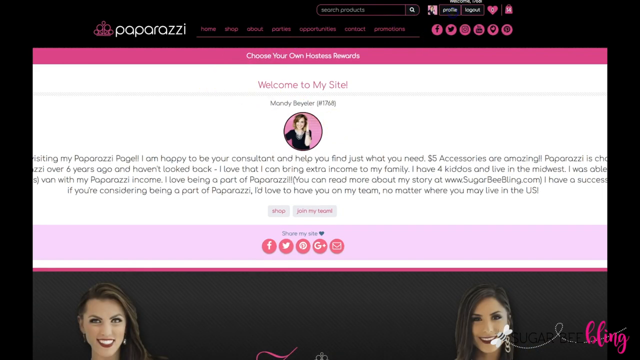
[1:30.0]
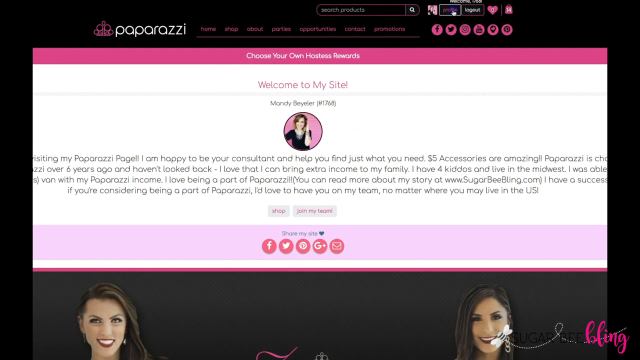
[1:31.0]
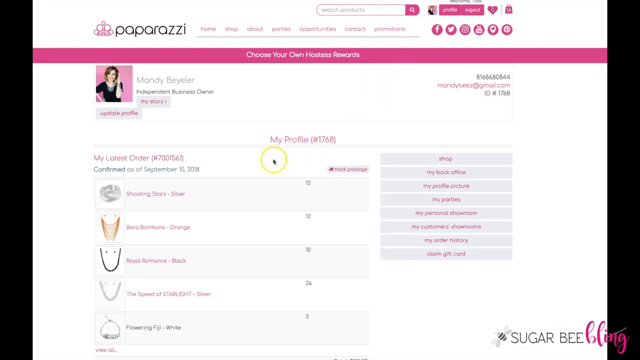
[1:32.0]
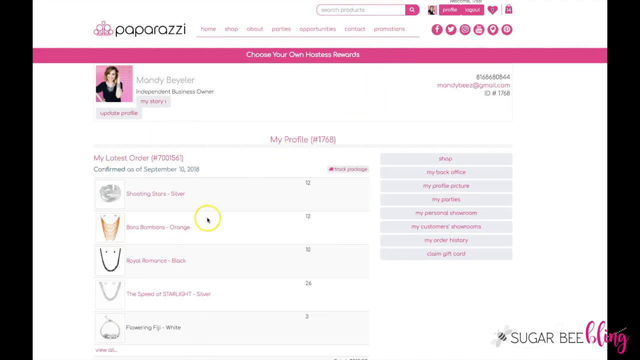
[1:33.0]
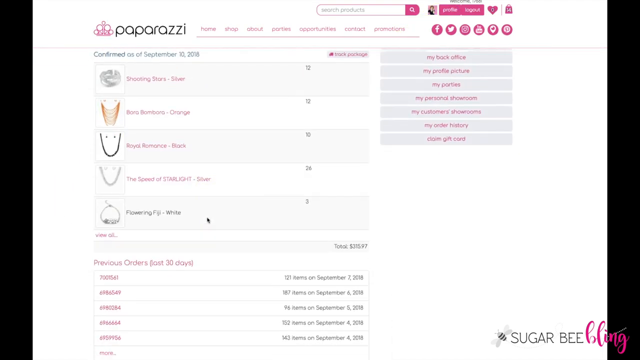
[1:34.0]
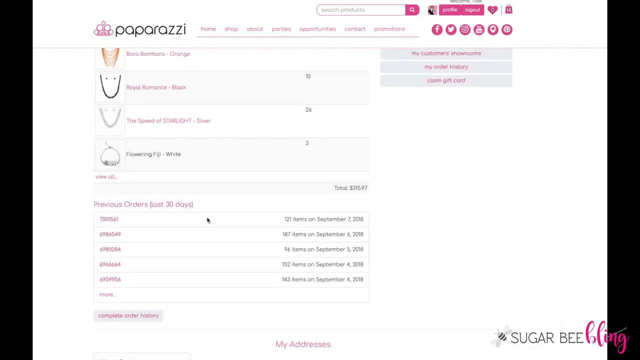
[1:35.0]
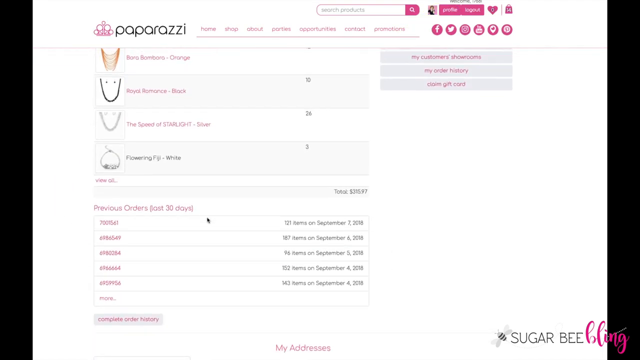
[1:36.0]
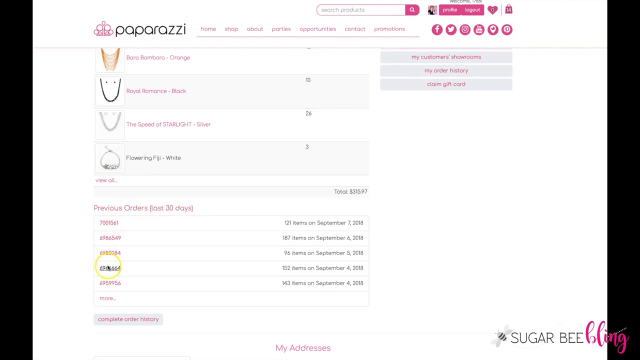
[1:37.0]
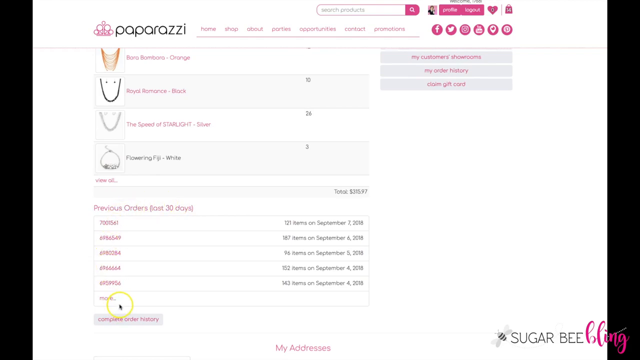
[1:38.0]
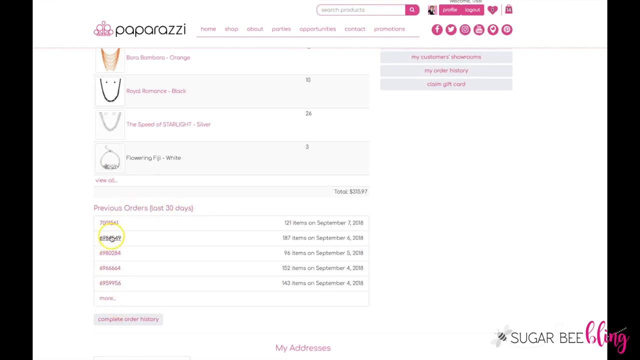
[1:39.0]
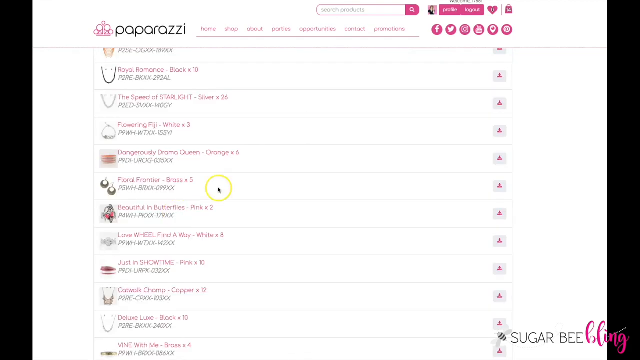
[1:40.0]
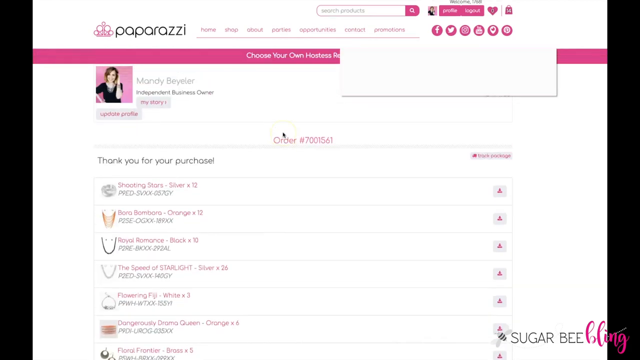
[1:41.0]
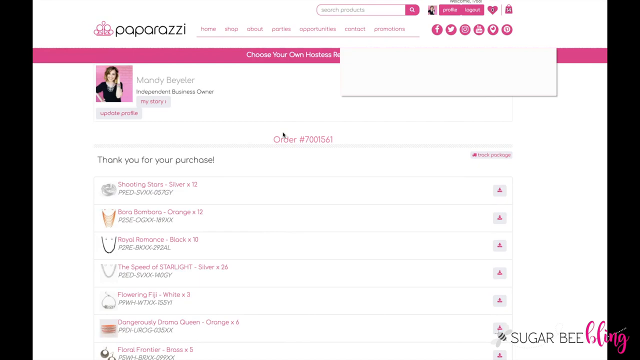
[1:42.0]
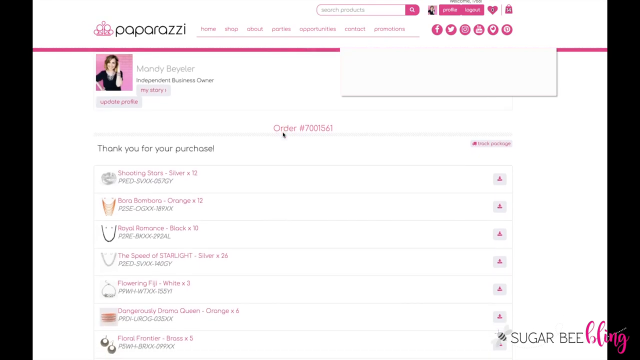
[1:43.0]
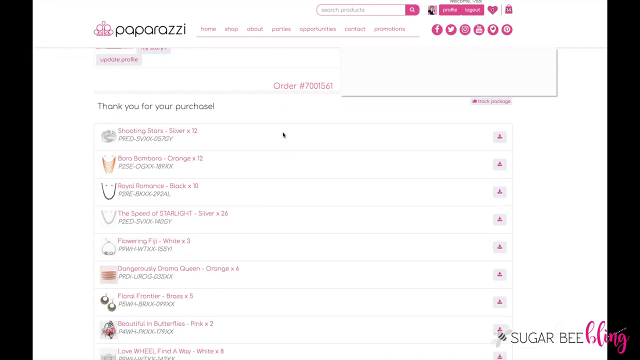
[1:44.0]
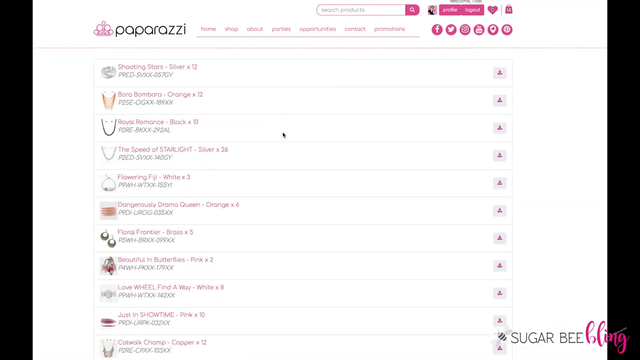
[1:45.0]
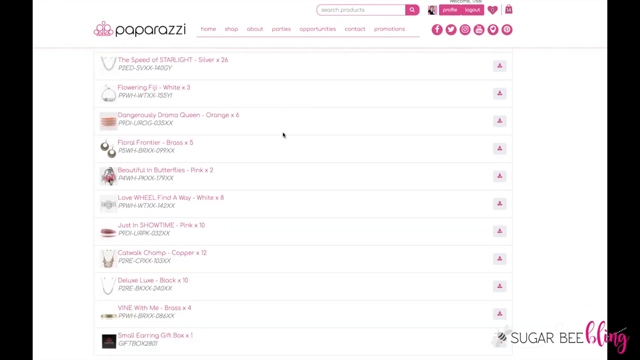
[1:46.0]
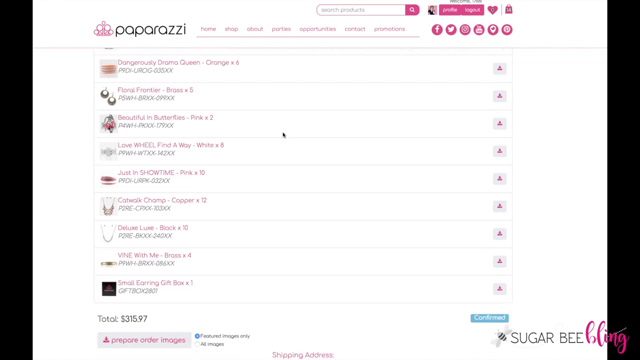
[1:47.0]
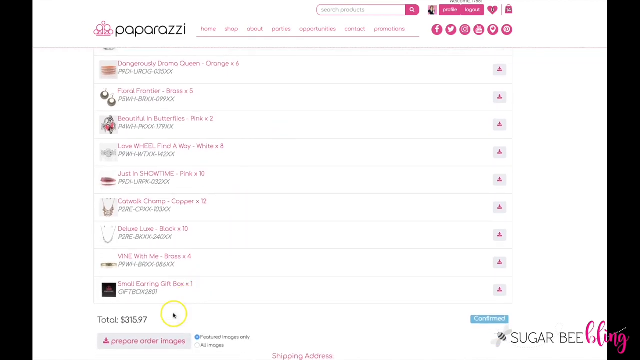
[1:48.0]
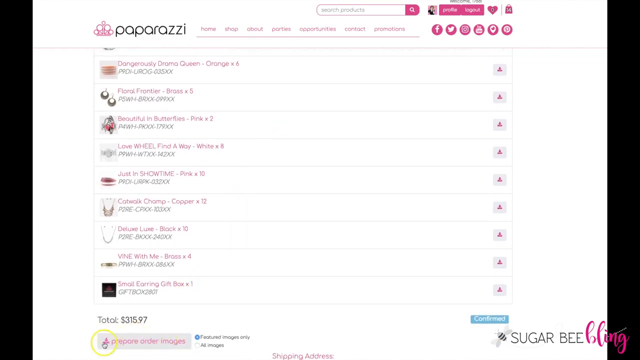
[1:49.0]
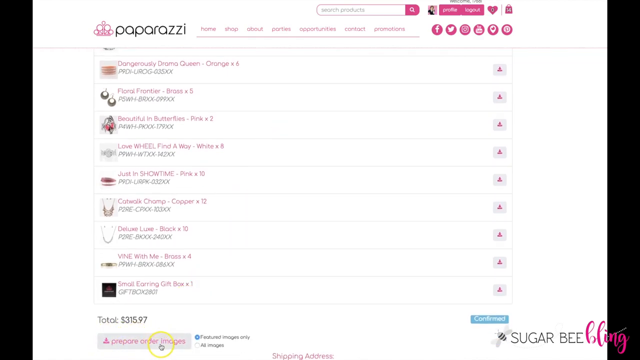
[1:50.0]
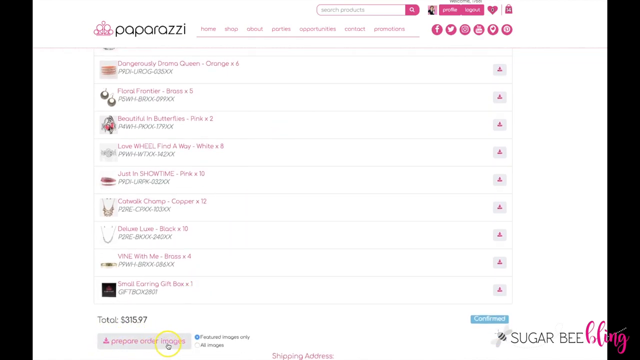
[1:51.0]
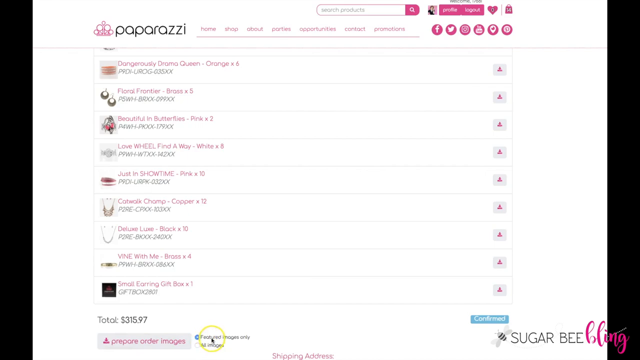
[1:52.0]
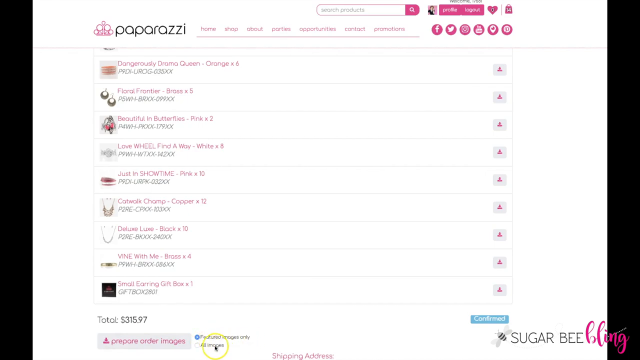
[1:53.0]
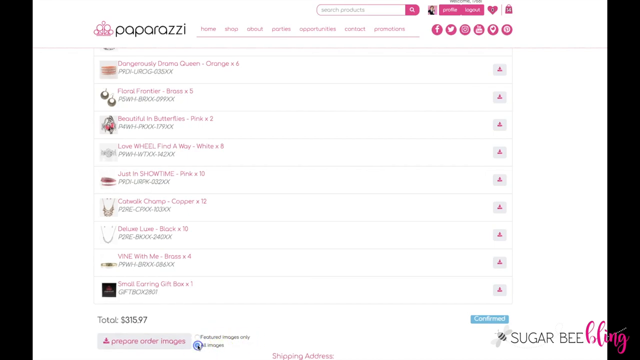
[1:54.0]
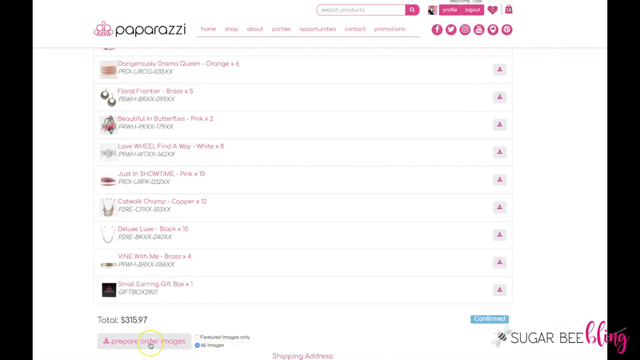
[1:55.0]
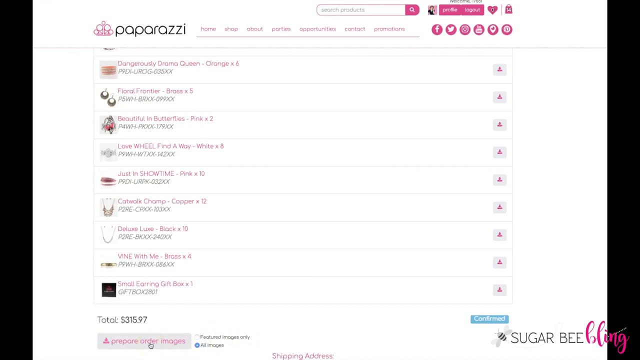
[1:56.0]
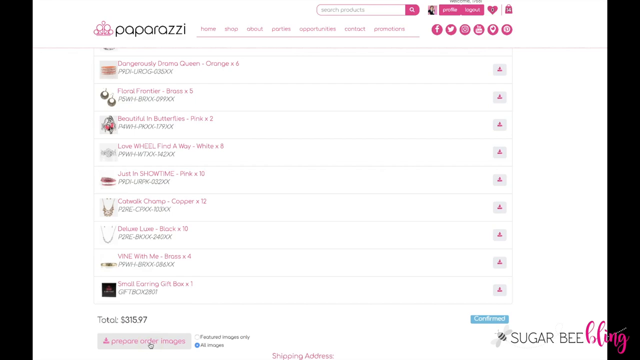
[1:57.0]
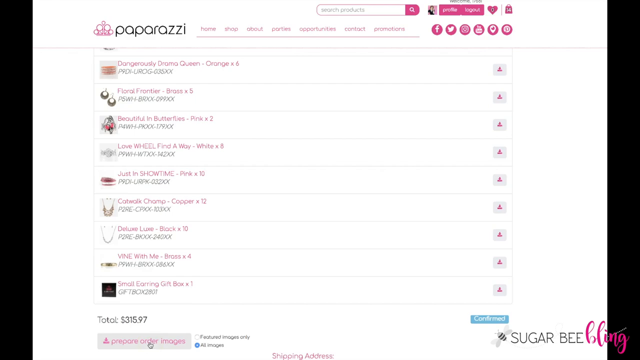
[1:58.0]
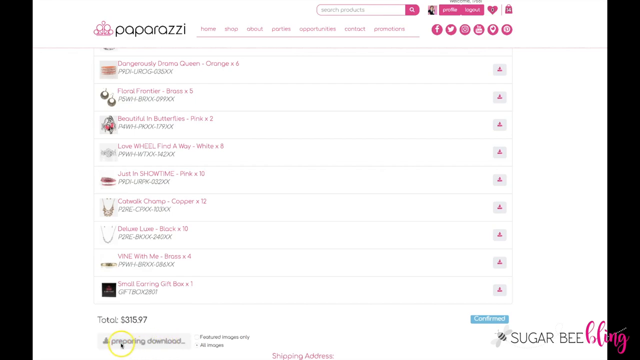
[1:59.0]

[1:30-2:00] The mouse cursor moves through the profile option, and the page of the Mandy Bayeler account appears, showing her latest orders. Scrolling down reveals many previous orders from the last 30 days, including a figure of $315. The website has a dark background, with the main part in pink, white and light pink. Social media links for Facebook, Twitter and Google Plus and an email link are shown. At the bottom are the faces of two happy women. The site apparently shows "choose own hostess rewards," and there are options for shop, back office and changing the profile picture.